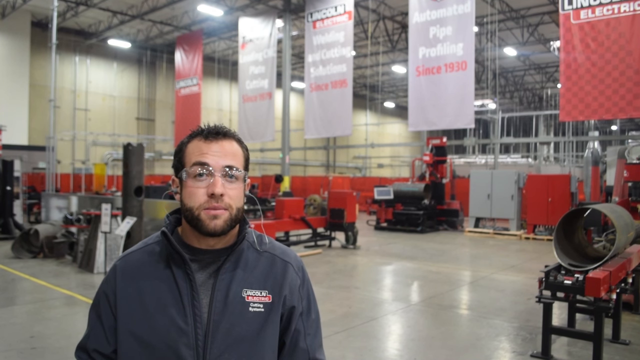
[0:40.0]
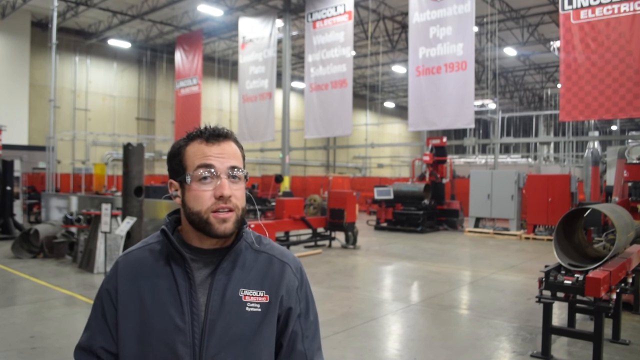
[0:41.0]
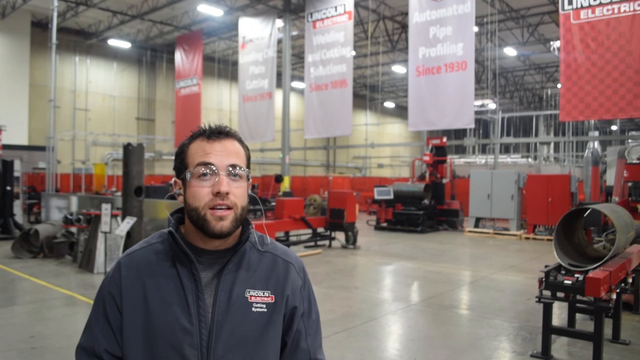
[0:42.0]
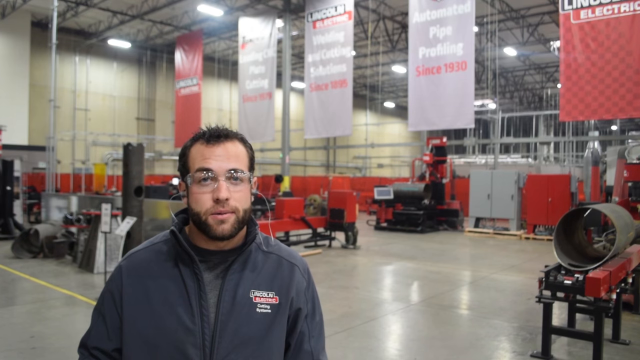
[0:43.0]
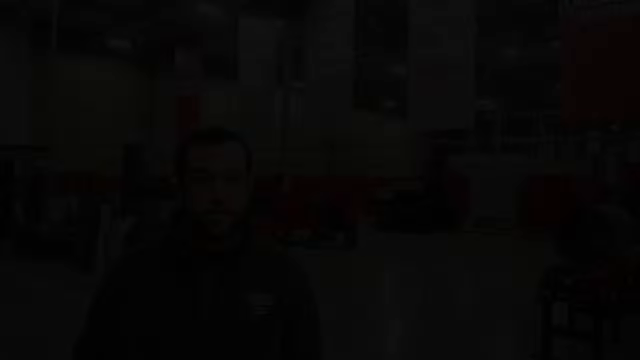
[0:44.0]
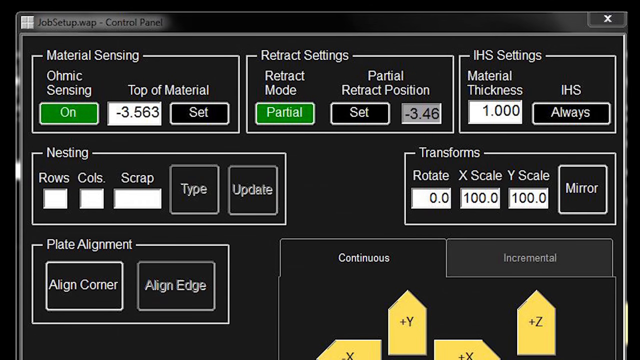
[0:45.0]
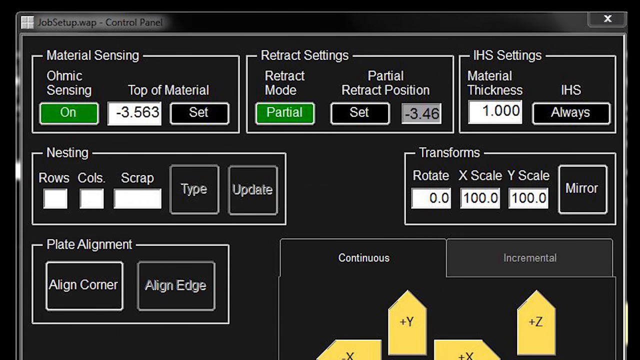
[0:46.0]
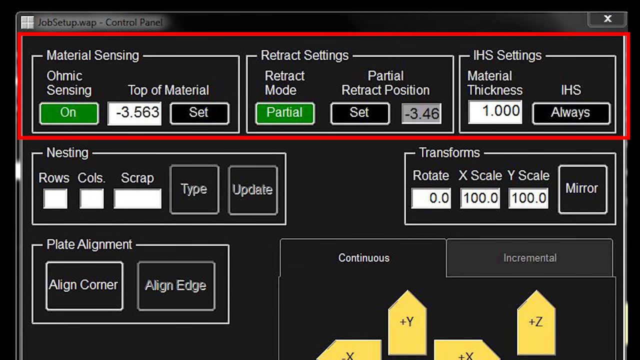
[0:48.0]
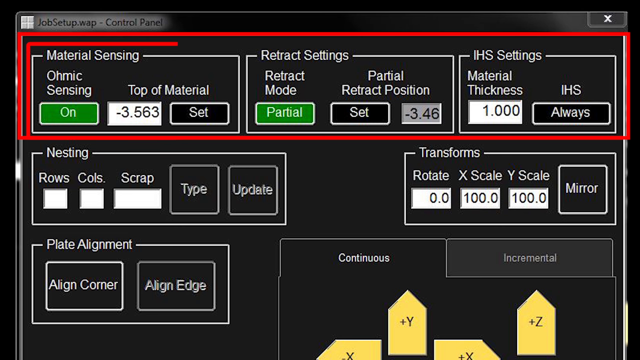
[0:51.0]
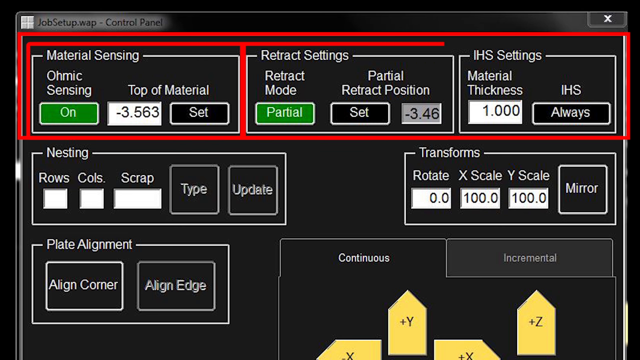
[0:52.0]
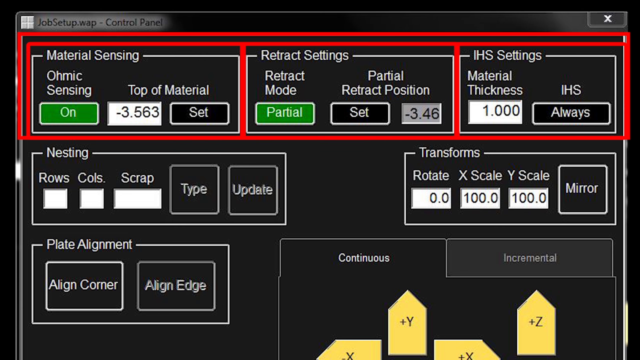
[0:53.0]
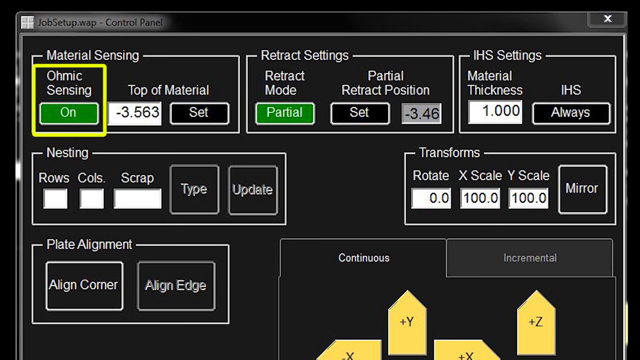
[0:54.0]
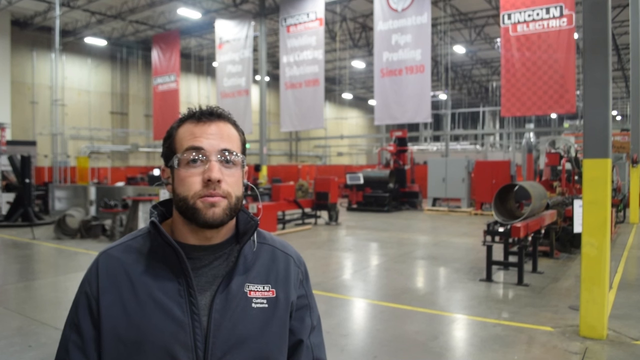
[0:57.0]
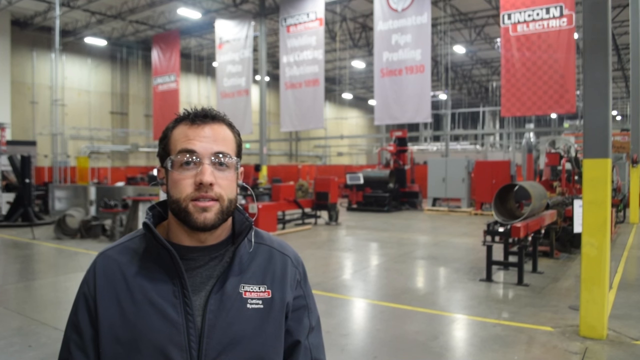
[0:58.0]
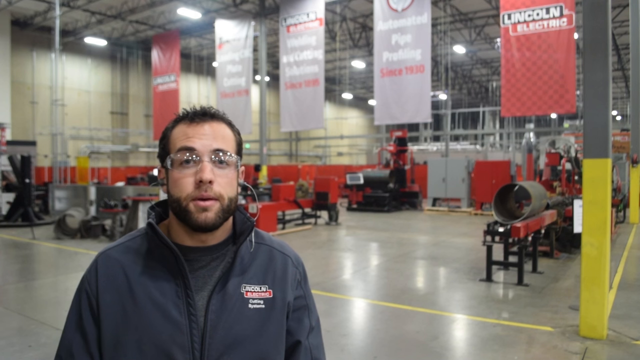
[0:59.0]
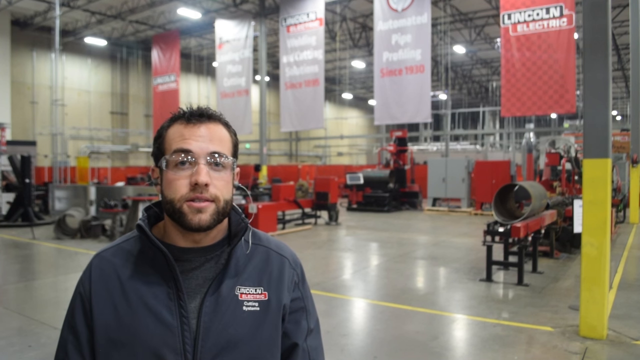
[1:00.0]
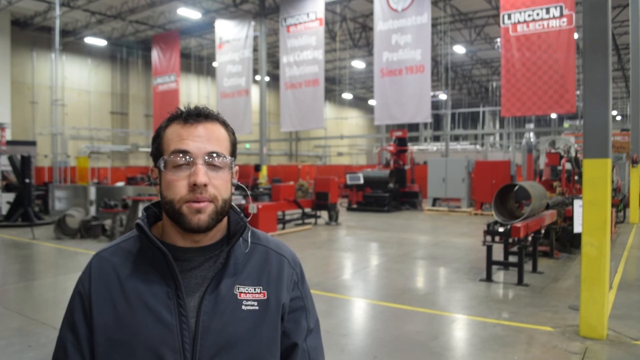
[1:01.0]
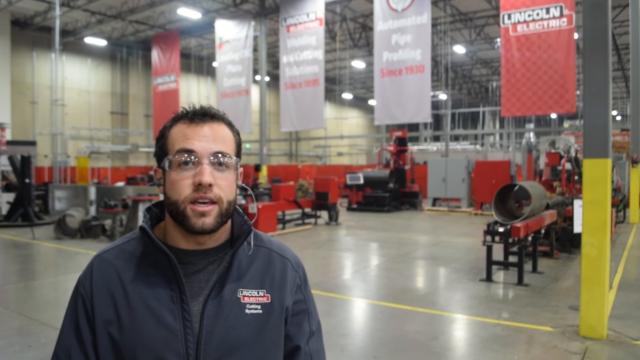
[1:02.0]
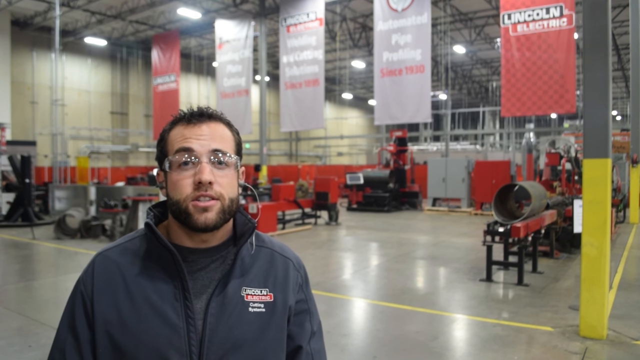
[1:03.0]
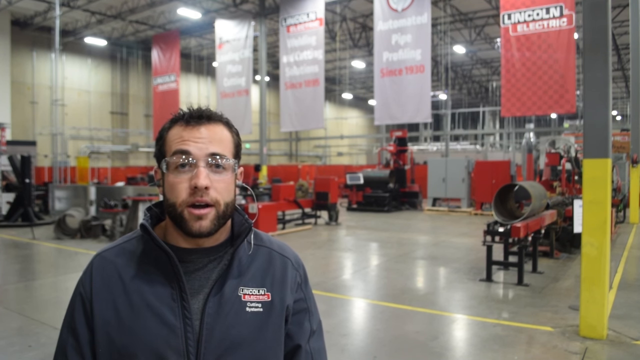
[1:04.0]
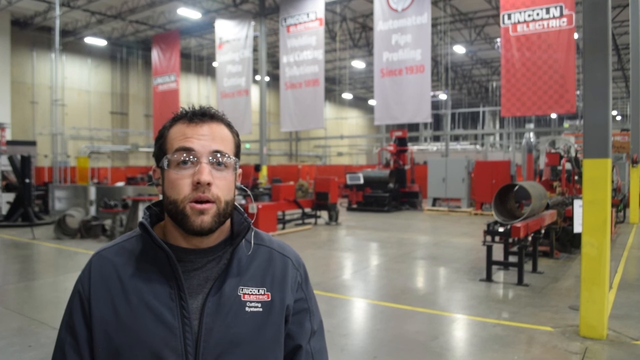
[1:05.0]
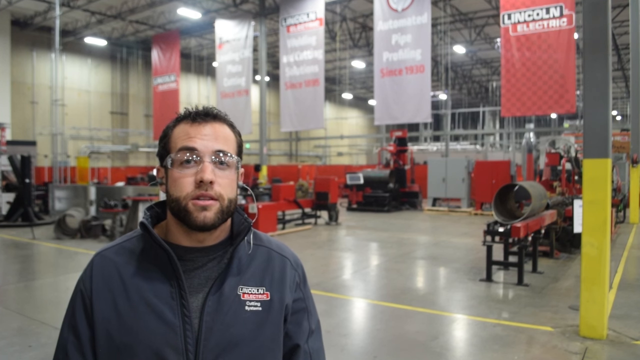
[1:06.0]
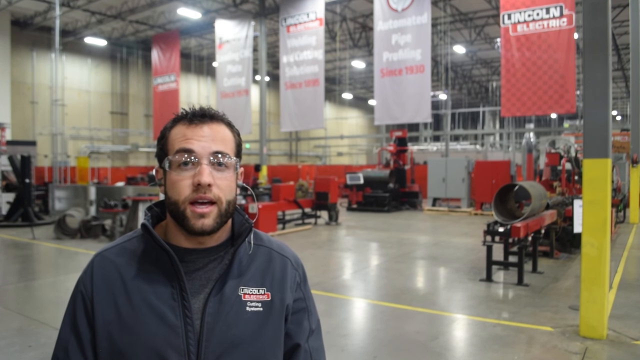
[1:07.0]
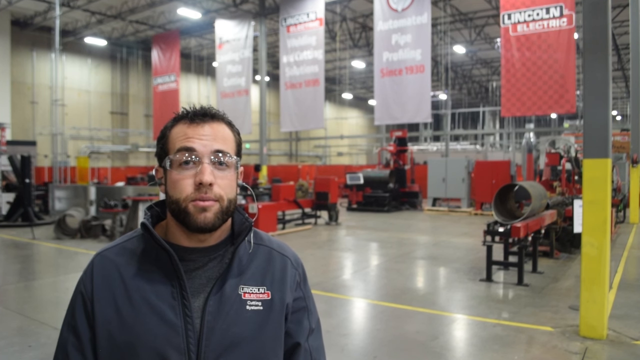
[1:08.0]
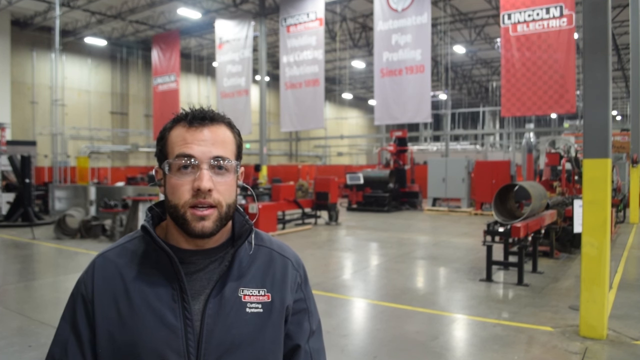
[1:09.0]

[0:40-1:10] Mark Humphries is talking. A "job setup" screen then appears. "Material sensing" is on, and under it "top of material" is set with the value -3.563. Beside it is a "retract settings" box set to "retract mode", with a green box beneath it reading "partial". The "partial retract position" is set to -3.46. Under "IHS settings", the "material thickness" is 1.000 and IHS shows "always". Beneath that are "rows", "columns" and "scrap", then "type" and "update". Under "transforms" are "rotate", "X scale" and "Y scale": rotate has 0.0 in the box beneath it, X scale has 100.0 in a white box, and Y scale has 100.0 in a white box. Beside them is "mirror". Next is "plate alignment" with "align corner" and "align edge", followed by "continuous" and another option beside it. There is something red.